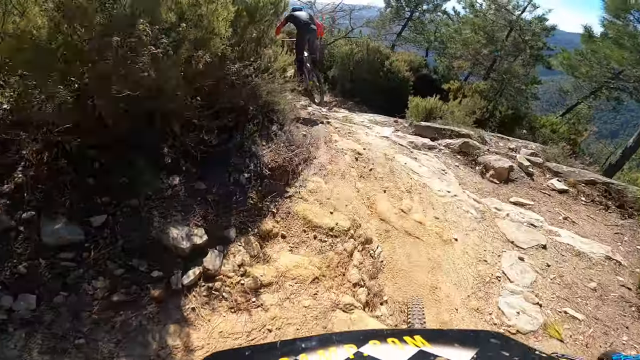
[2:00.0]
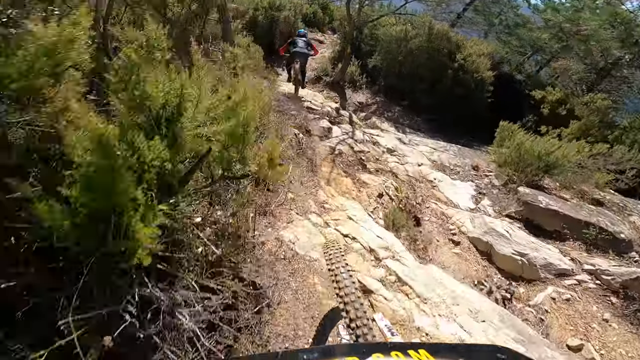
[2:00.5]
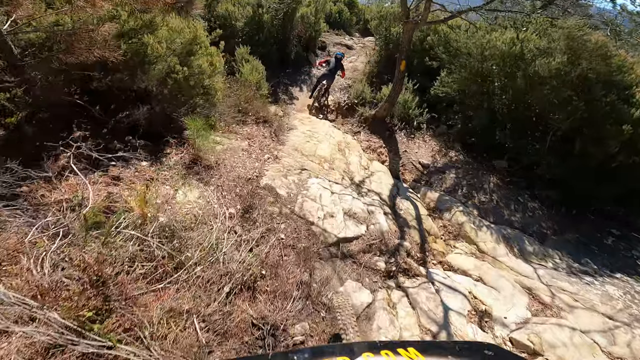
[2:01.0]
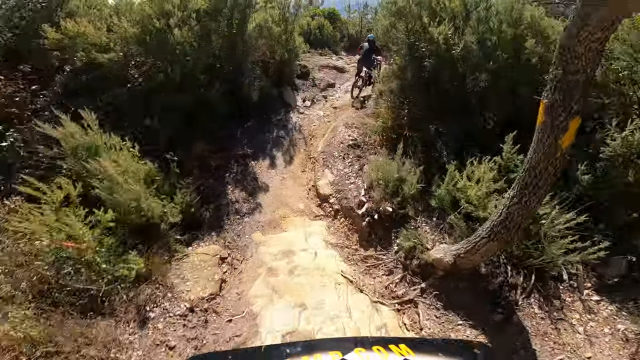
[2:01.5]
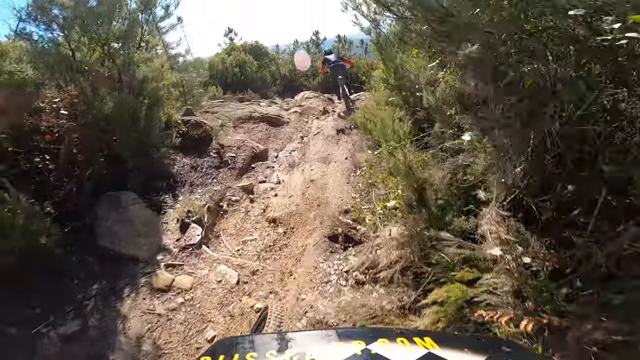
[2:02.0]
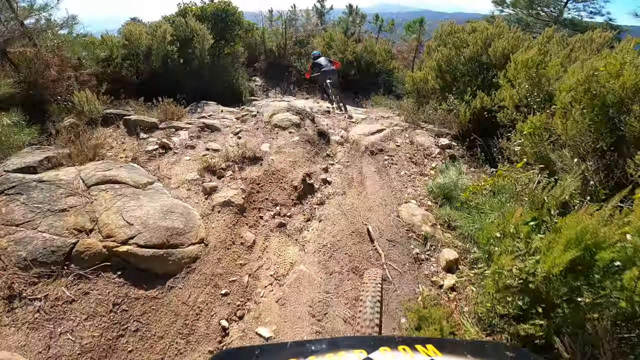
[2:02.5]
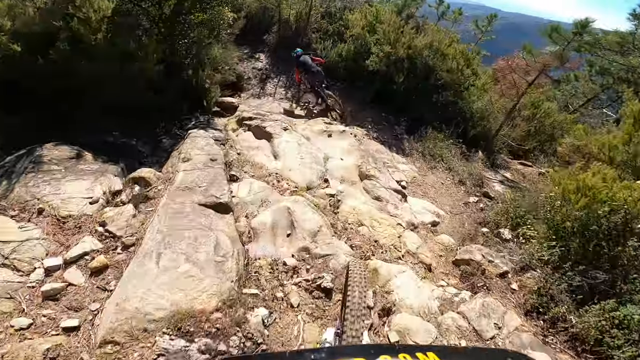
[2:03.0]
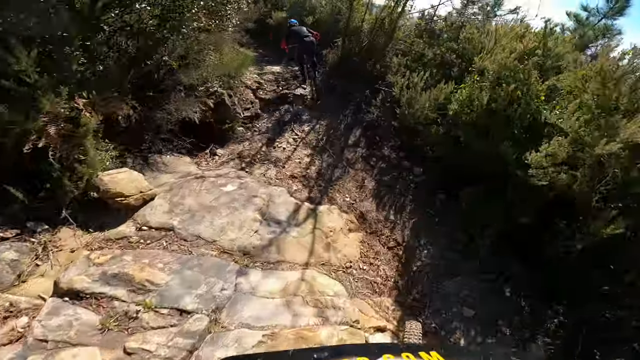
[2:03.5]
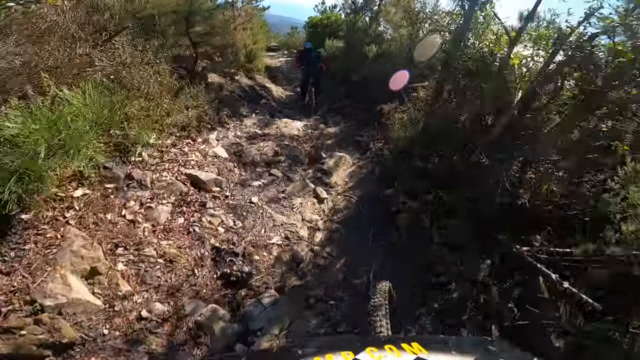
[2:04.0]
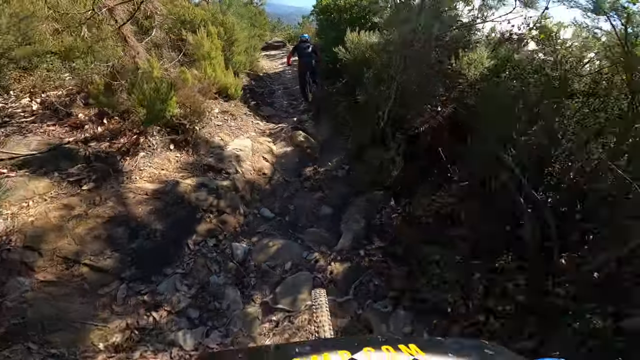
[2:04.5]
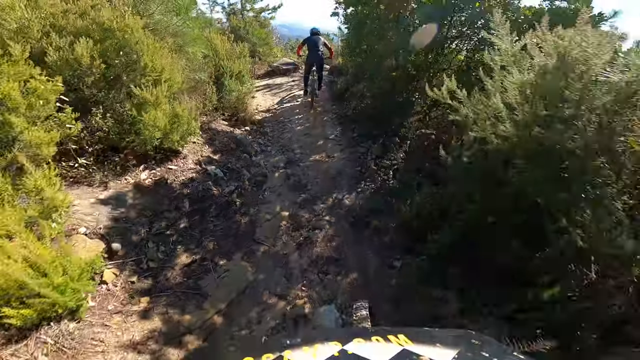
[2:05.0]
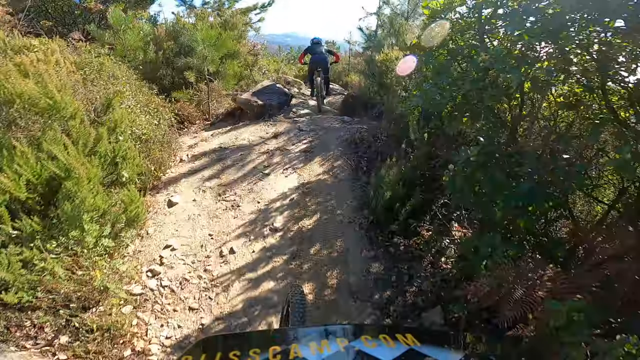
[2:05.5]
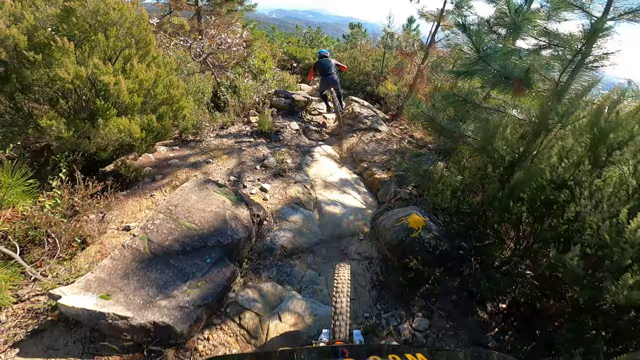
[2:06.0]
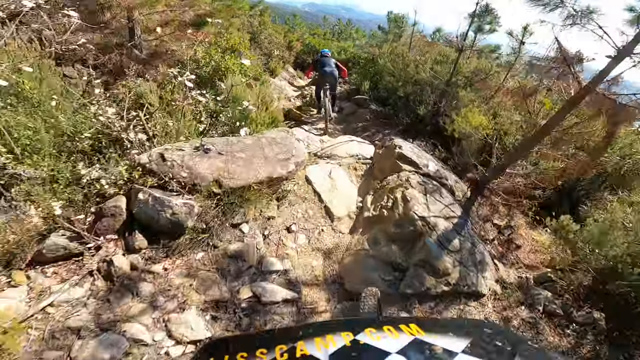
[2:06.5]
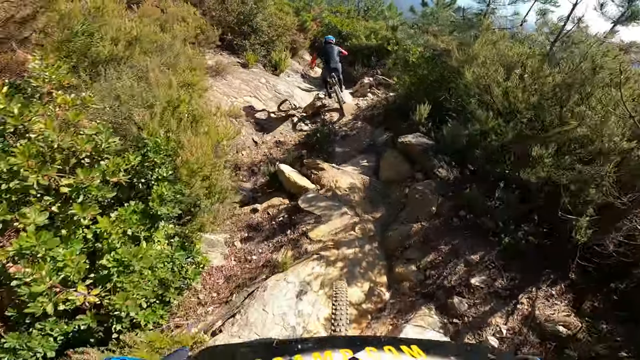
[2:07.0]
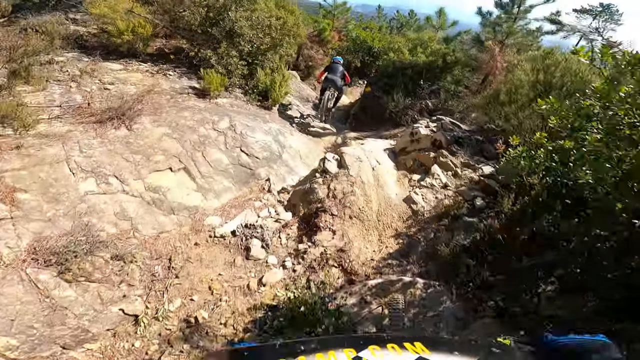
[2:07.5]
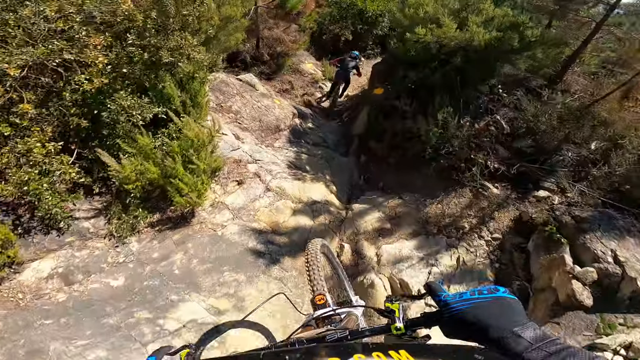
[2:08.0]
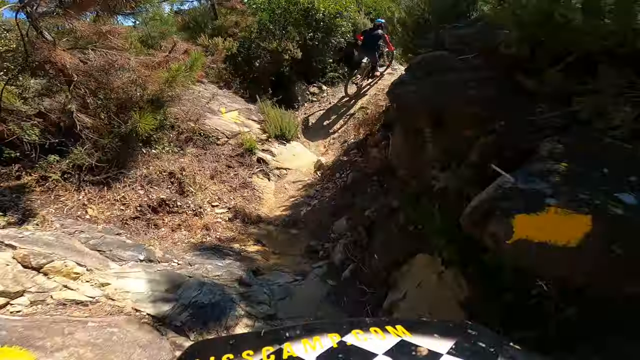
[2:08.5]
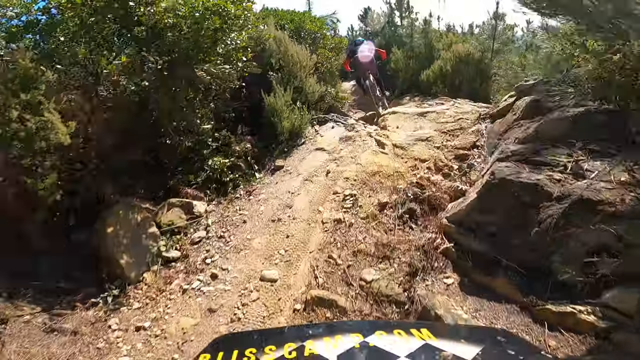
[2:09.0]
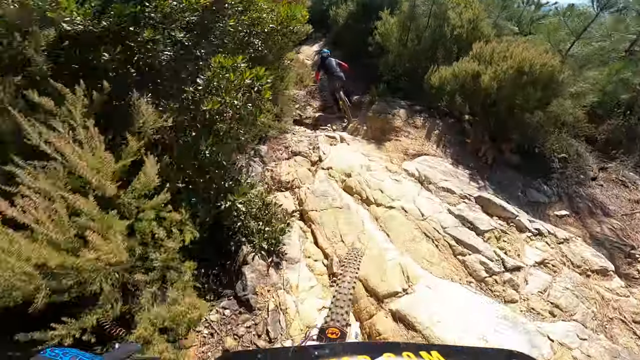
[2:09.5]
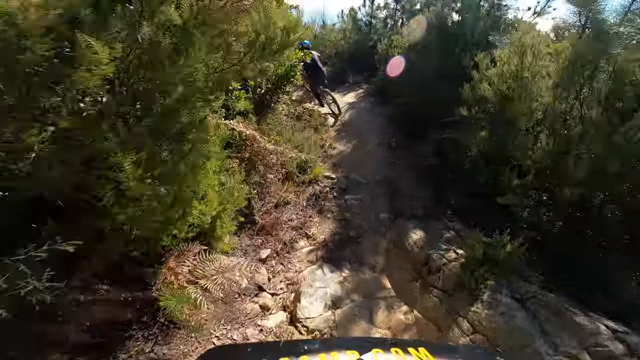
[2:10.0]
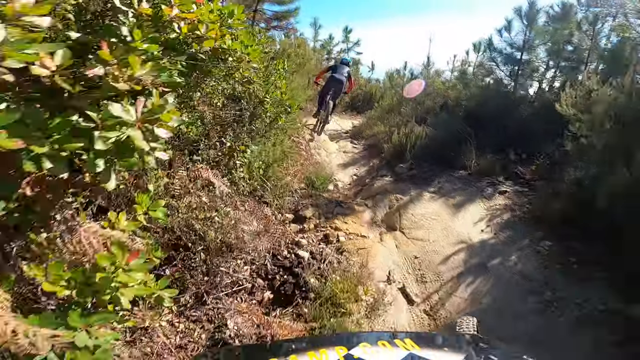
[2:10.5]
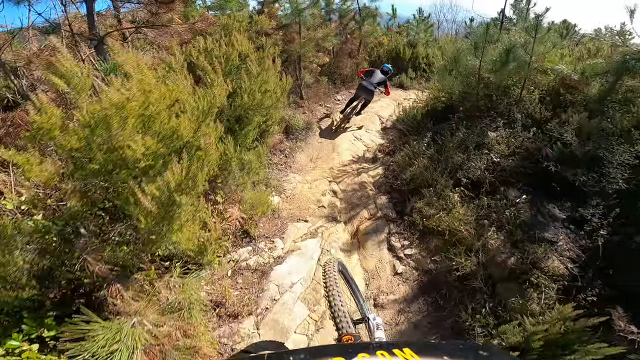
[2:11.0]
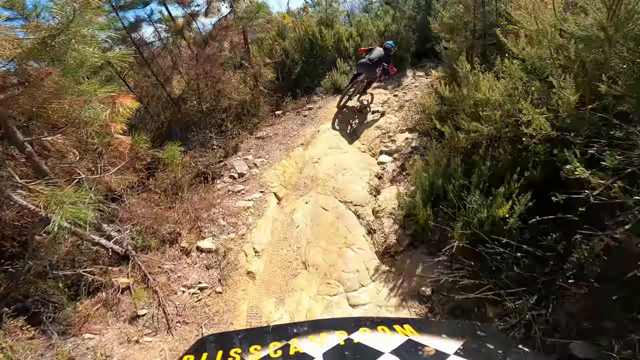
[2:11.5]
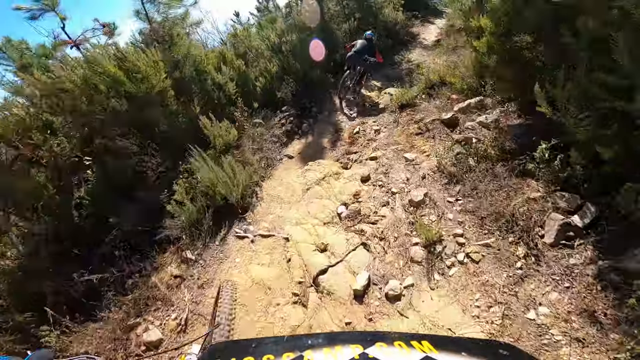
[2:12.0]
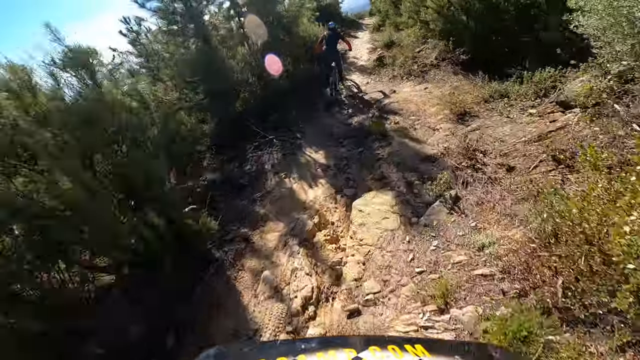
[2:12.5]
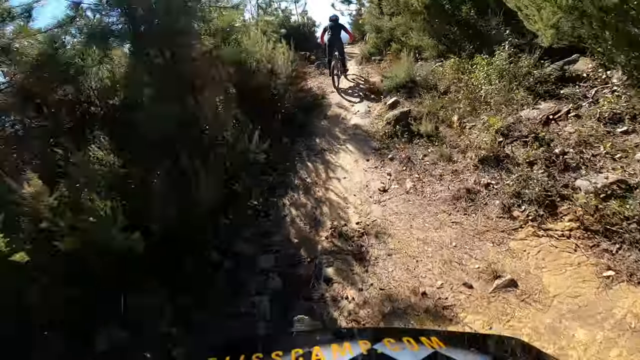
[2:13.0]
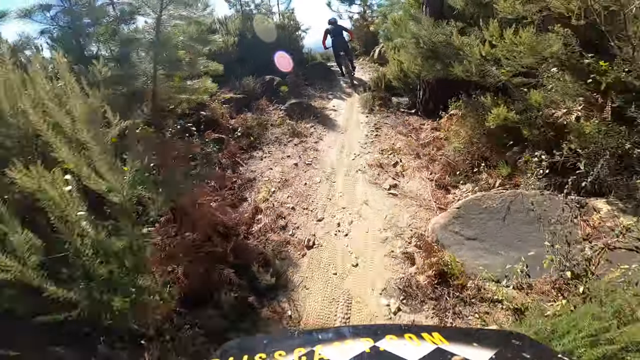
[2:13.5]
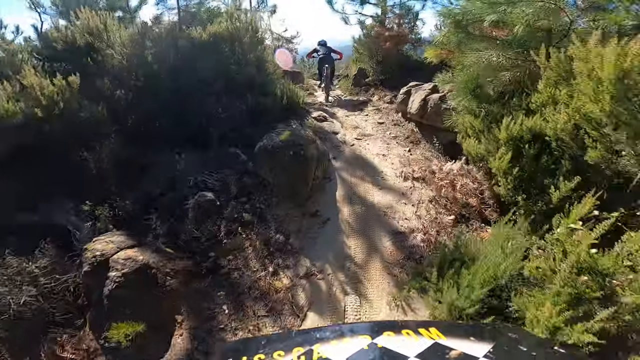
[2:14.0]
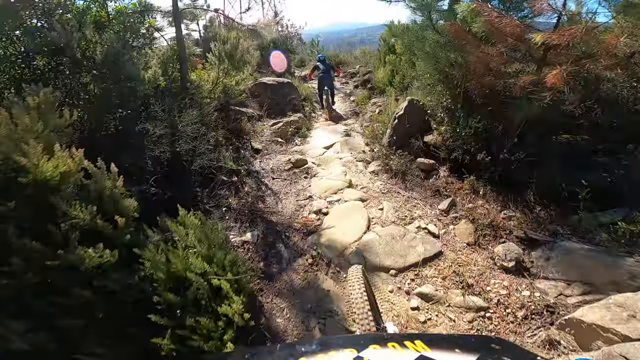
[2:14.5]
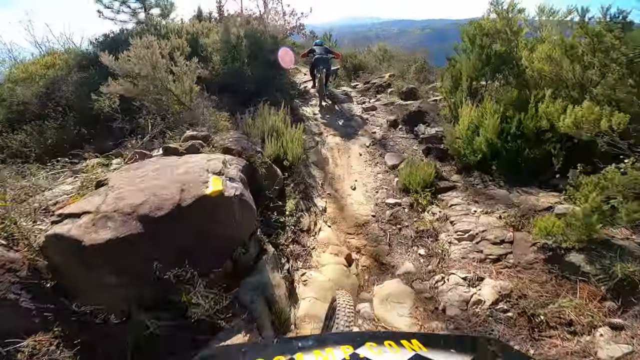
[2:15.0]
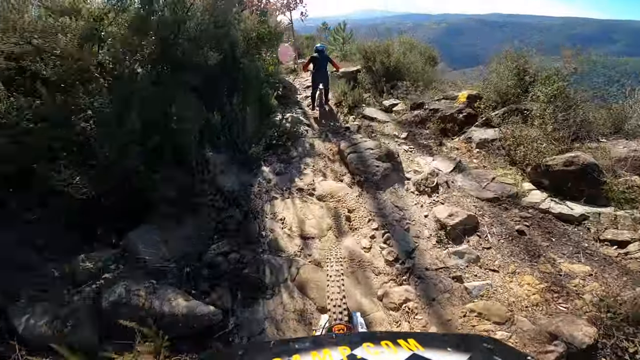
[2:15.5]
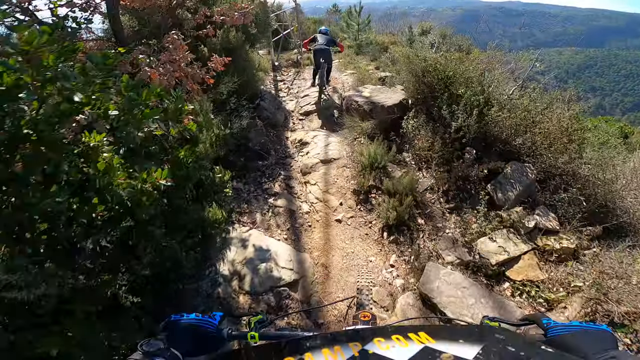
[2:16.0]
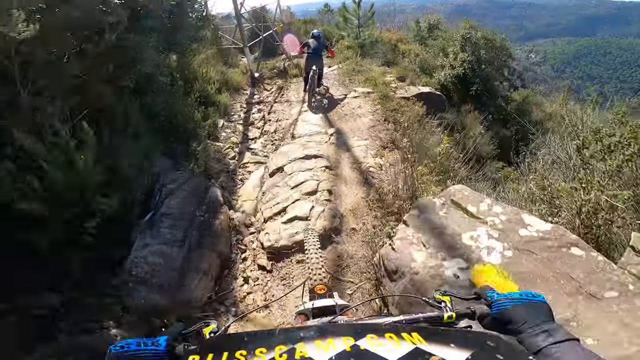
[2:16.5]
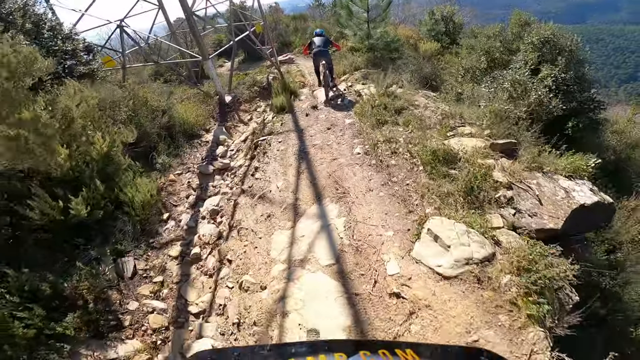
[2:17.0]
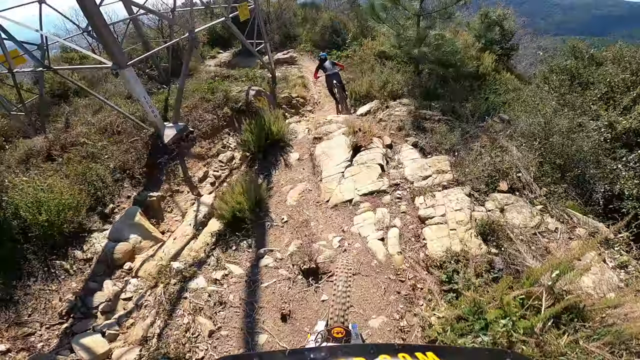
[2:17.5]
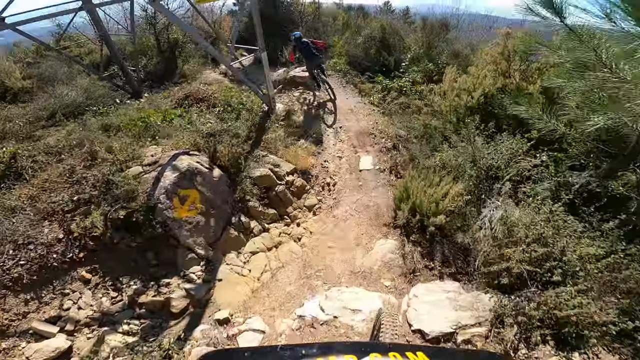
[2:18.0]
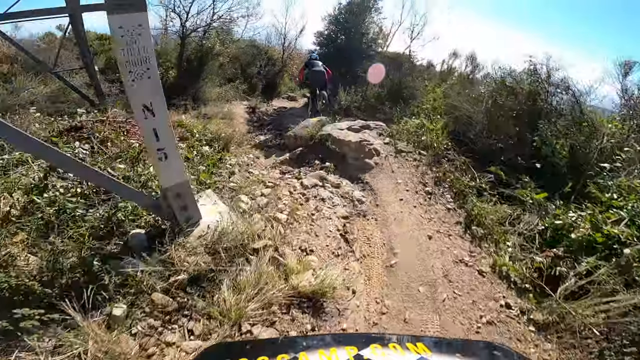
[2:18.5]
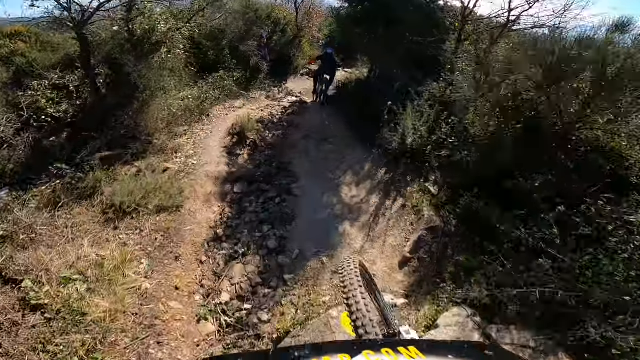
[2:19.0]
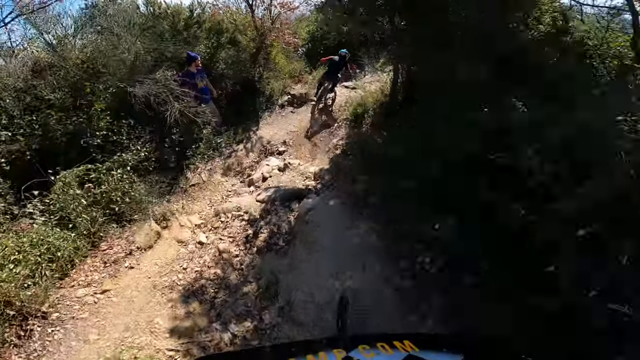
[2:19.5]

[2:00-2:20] The camera is still following behind him as he navigates left and right, at one point jumping over massive boulders. He swerves left, then takes a hard right, and goes pretty much straight, with the camera probably about 10 to 15 yards behind him. He swerves slightly to the left and goes over a huge boulder. The shot ends almost mid-air, just after a jump. There are trees in the background and toward his left, and very sharp, jagged rocks that he navigates through. The camera appears to be on a bike as well, possibly mounted on a helmet.